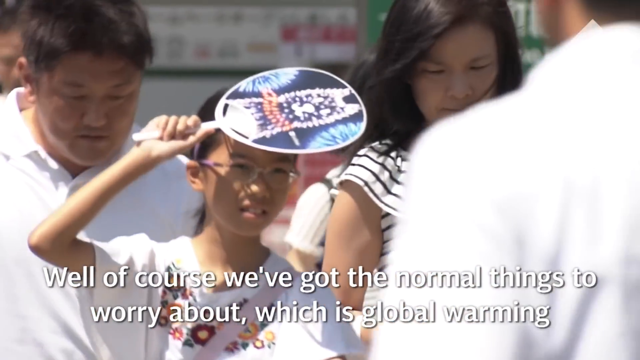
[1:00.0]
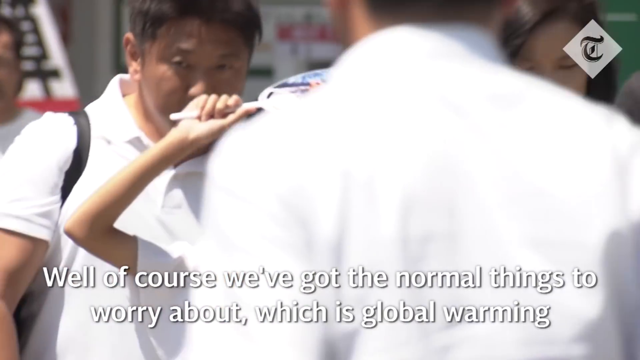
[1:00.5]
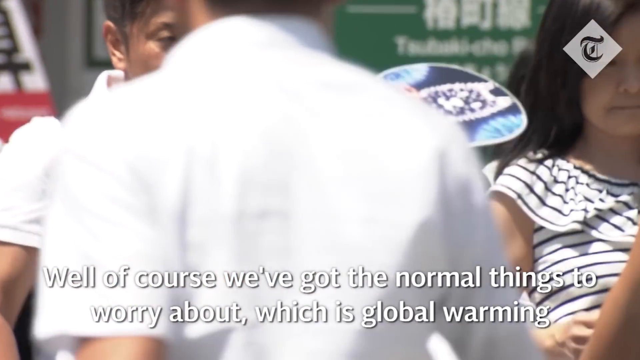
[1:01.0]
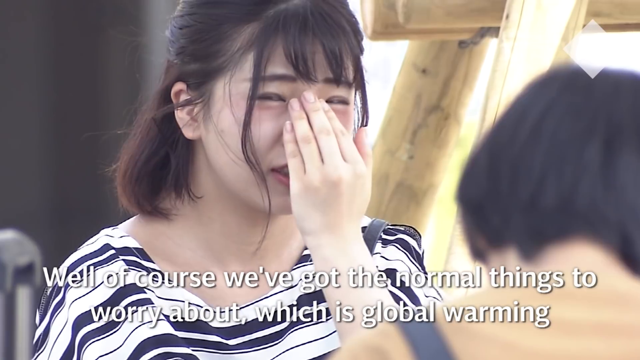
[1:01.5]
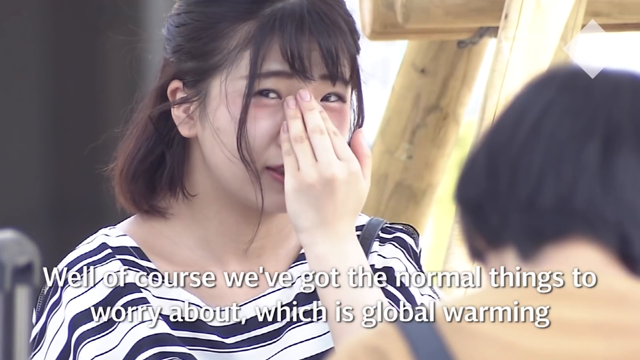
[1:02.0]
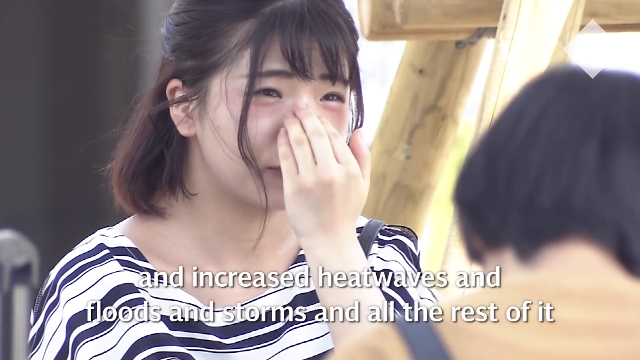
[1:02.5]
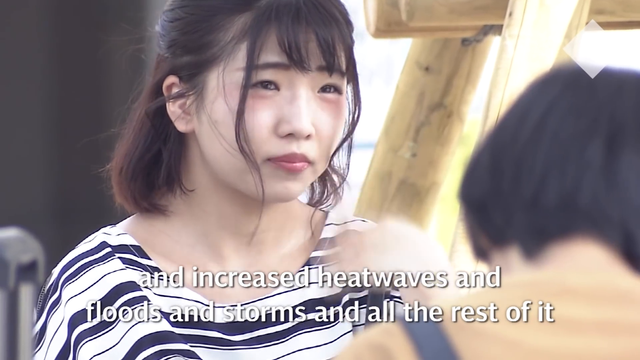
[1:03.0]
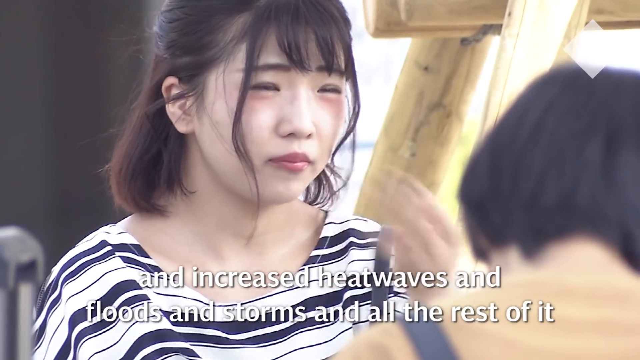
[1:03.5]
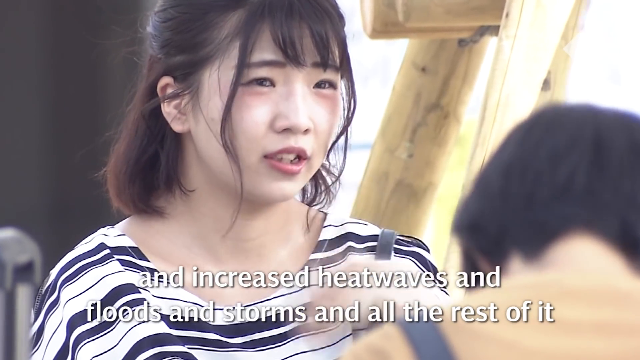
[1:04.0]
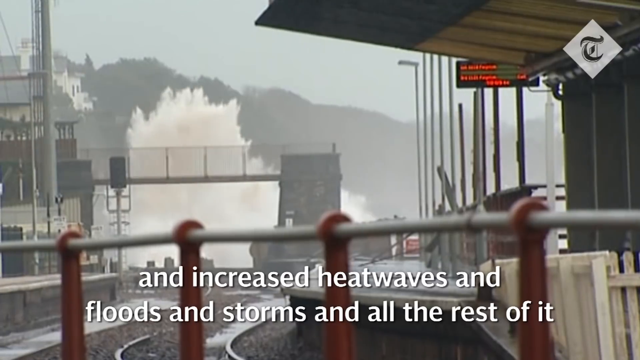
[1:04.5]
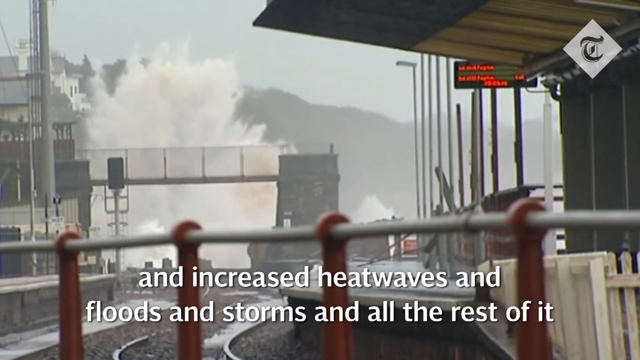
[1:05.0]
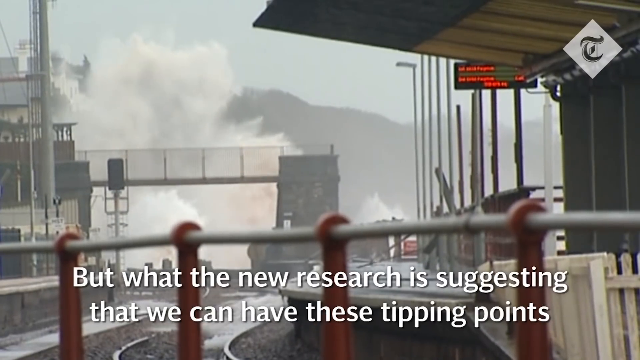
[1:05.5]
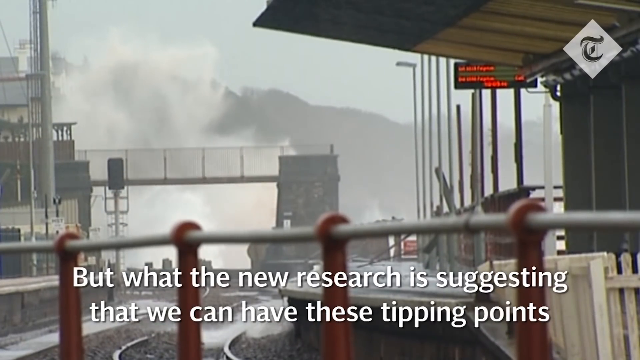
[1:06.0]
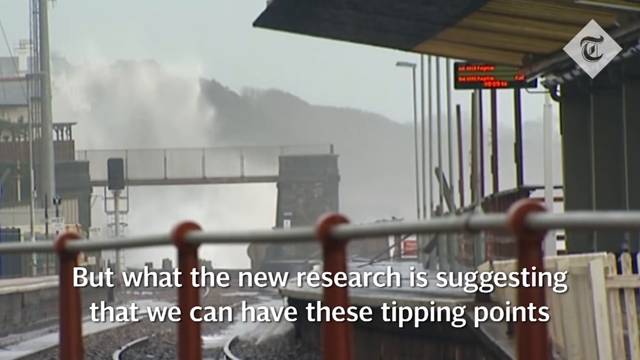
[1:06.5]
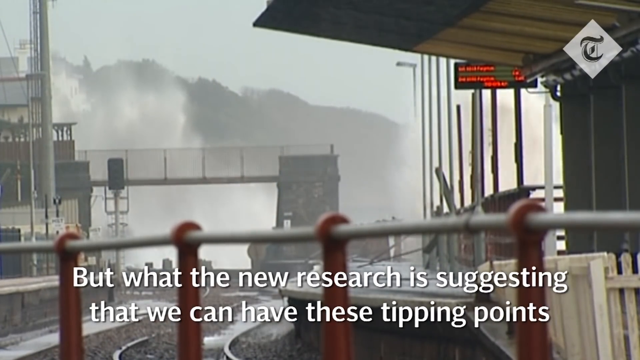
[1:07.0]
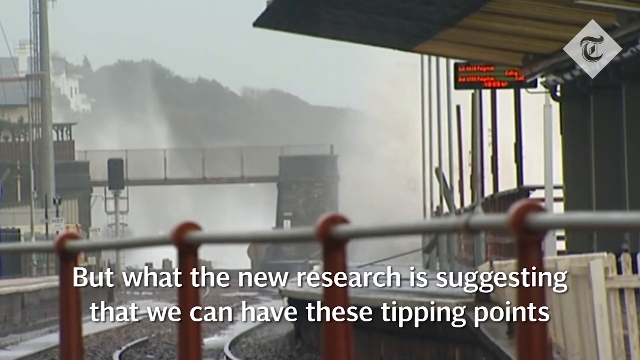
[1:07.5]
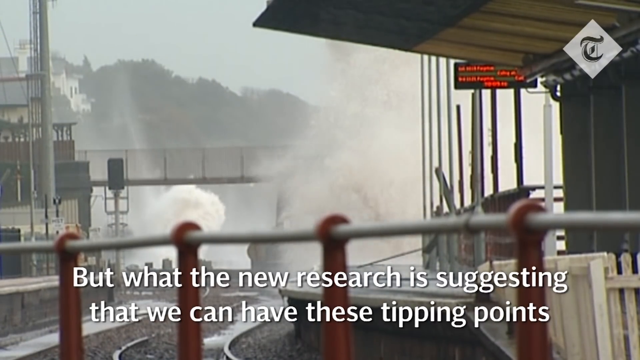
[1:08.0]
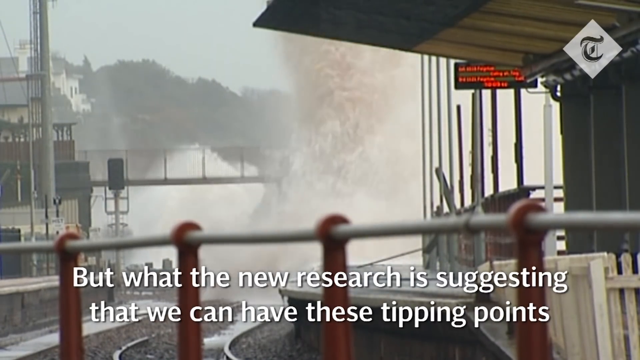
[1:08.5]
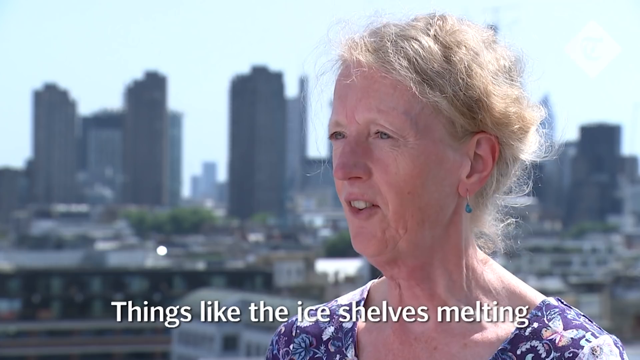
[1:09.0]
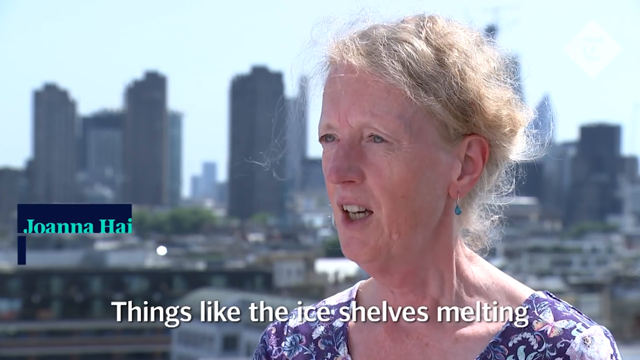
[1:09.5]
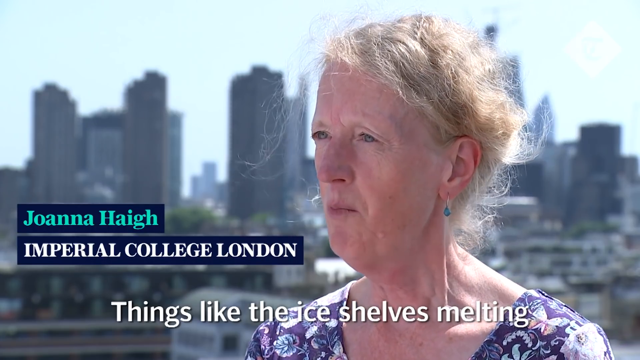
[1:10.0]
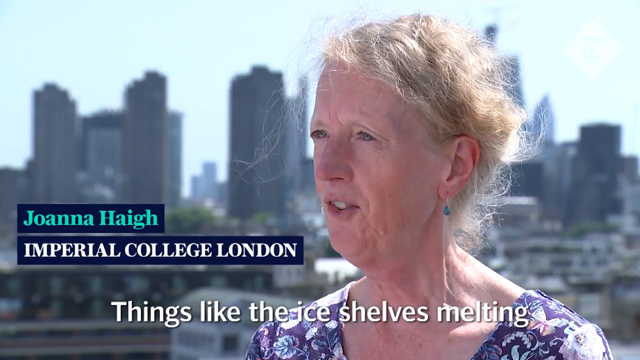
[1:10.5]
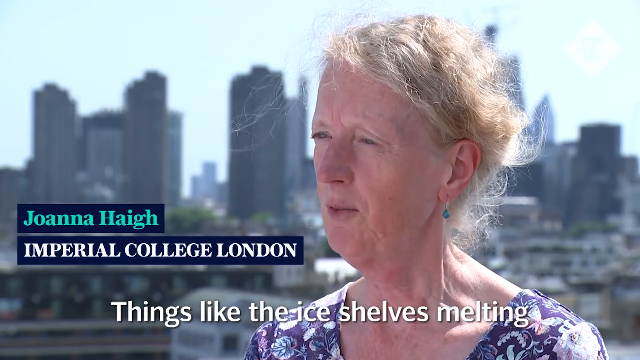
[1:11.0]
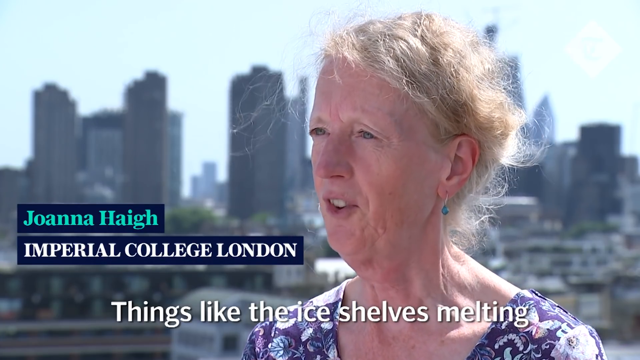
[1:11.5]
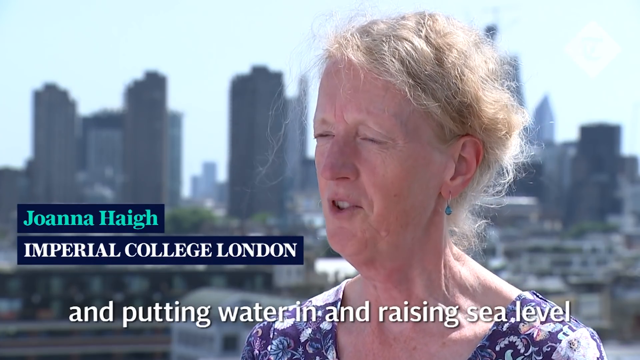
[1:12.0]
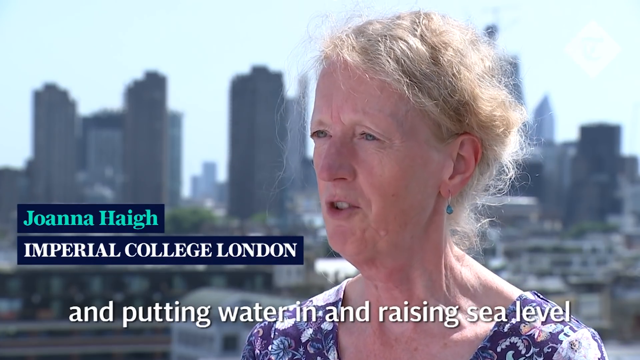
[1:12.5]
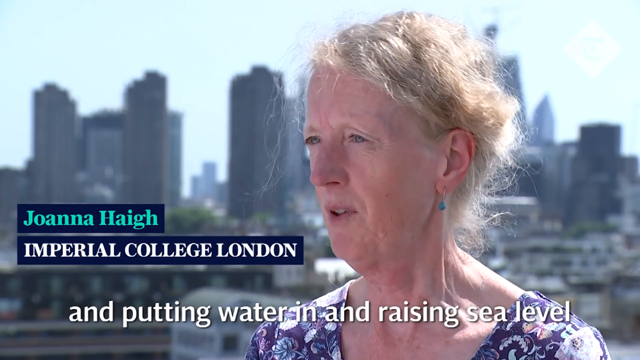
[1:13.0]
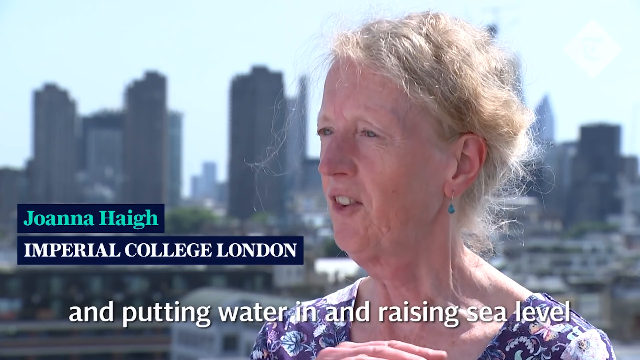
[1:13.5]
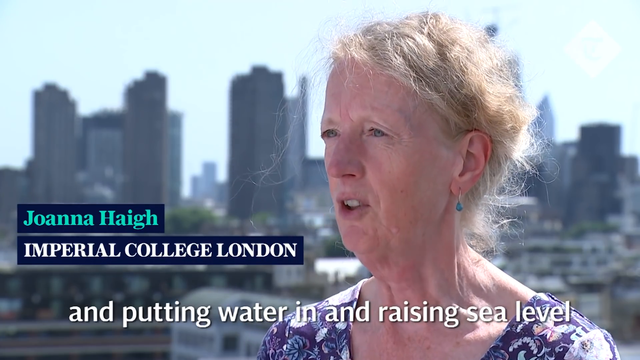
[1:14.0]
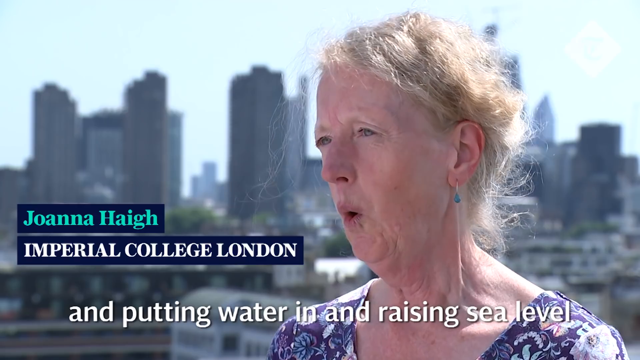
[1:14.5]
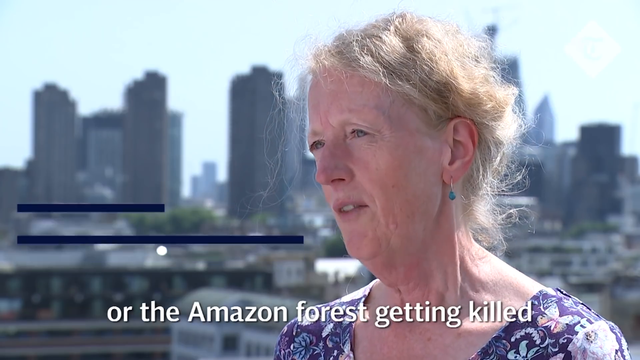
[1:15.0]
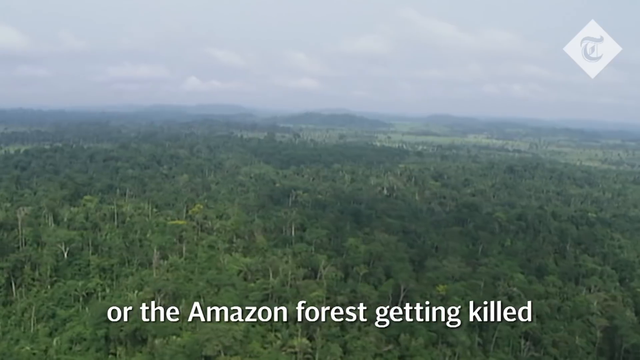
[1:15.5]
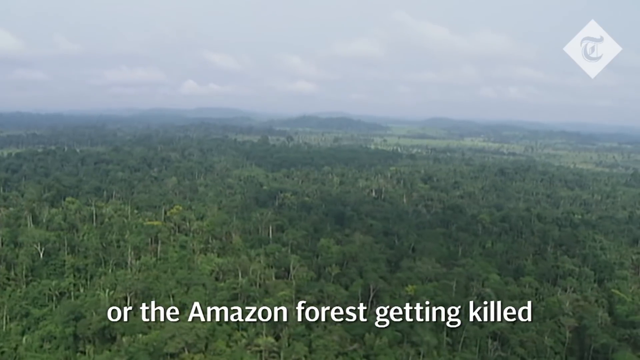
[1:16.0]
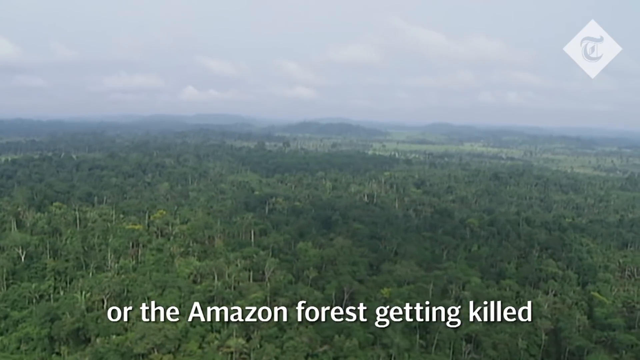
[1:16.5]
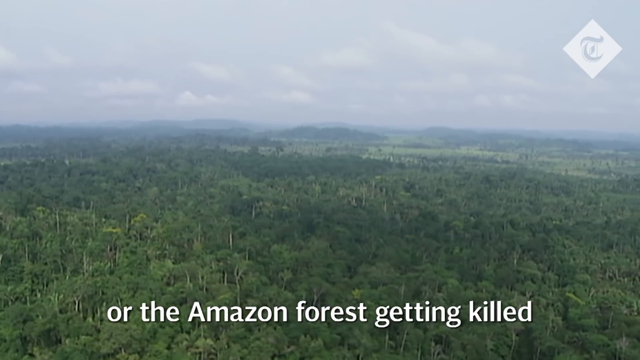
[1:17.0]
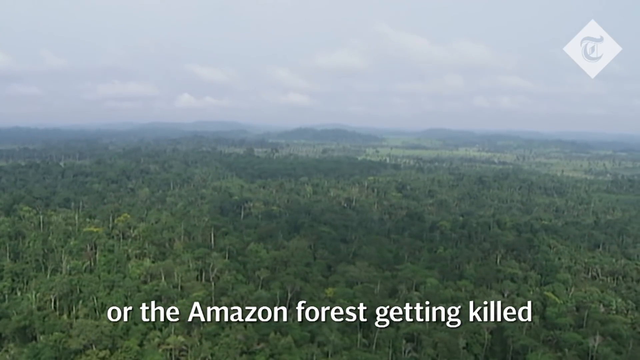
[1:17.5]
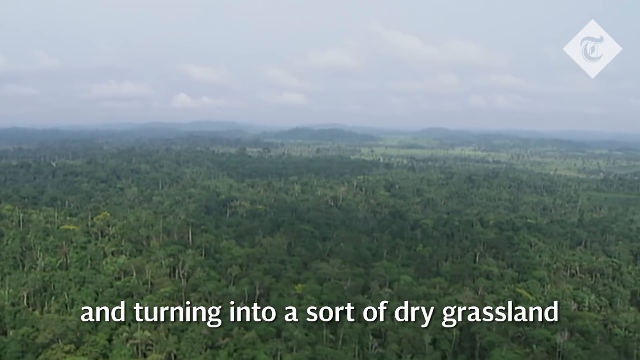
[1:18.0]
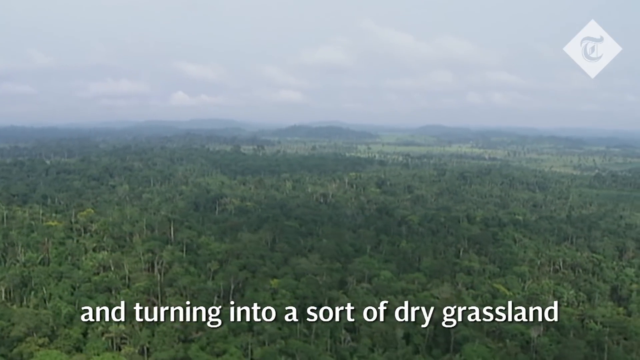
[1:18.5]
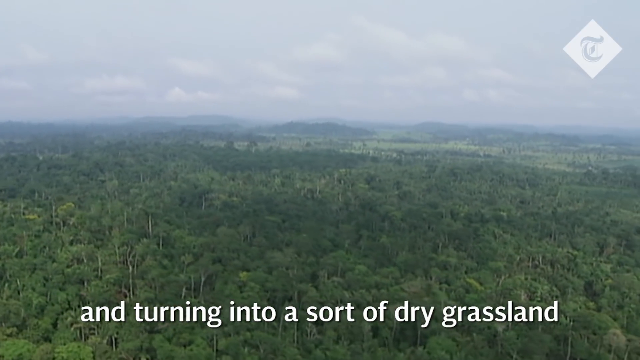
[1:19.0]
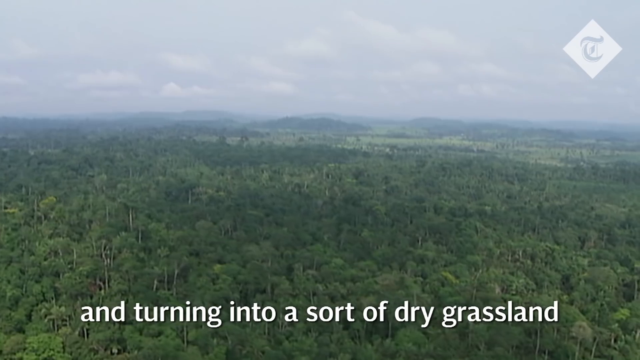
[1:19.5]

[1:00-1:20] Different people are visible, including children holding something used to shield from the sun. The people look Chinese. A woman and a man are walking in the street. A Chinese lady with long hair wears a top with white and black stripes. Someone's eyes are very red. Water is exploding. An old white woman with messy hair is walking. Nature, trees and a small sun are visible.